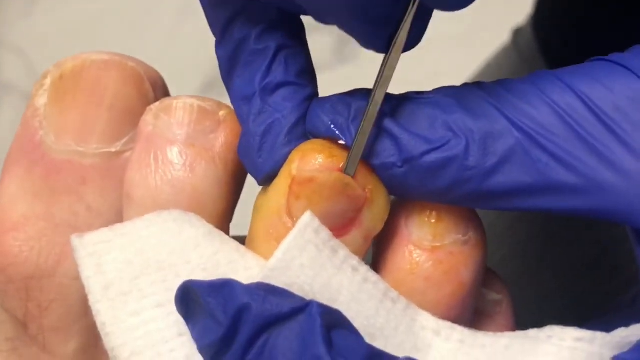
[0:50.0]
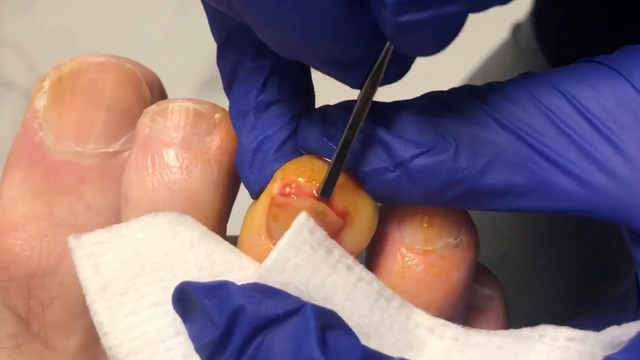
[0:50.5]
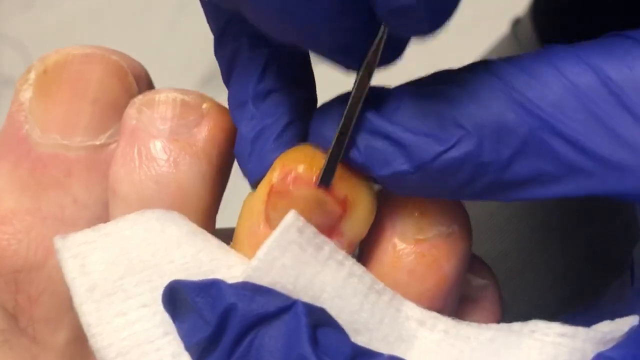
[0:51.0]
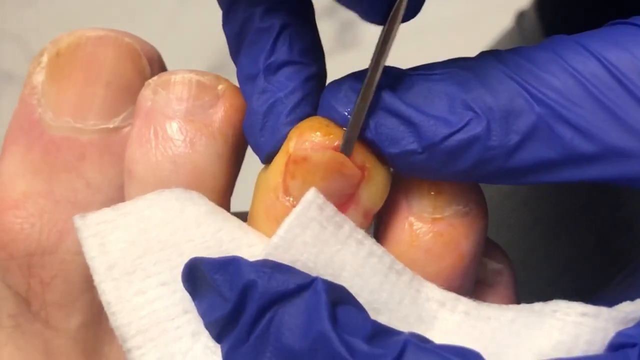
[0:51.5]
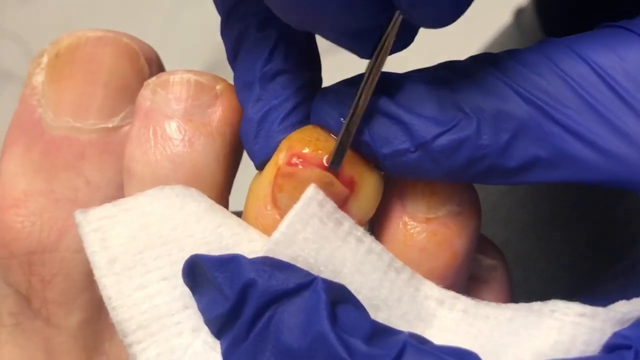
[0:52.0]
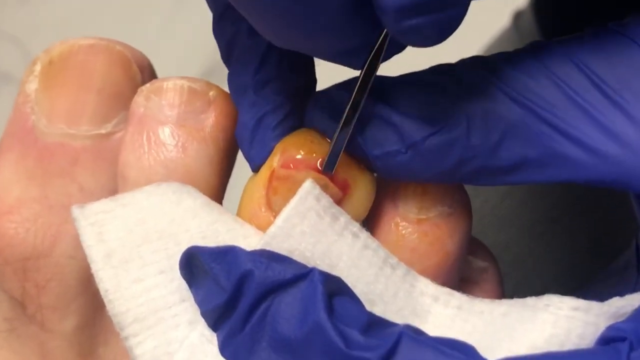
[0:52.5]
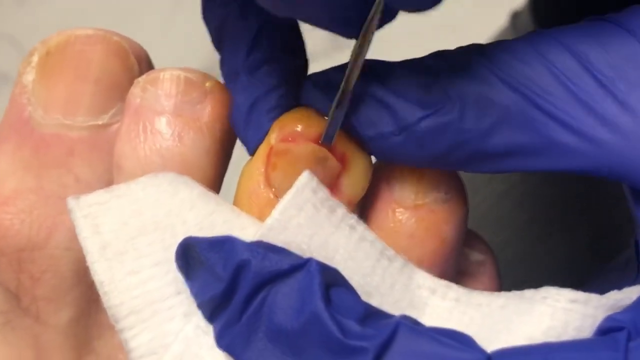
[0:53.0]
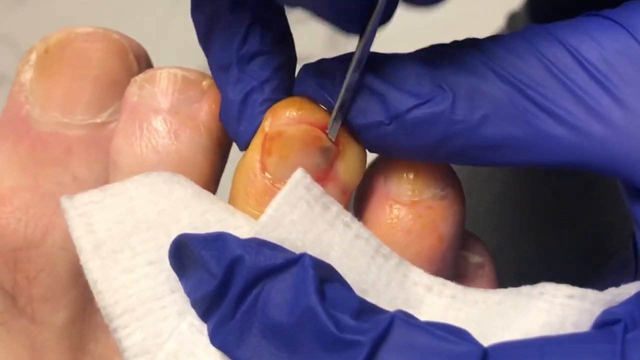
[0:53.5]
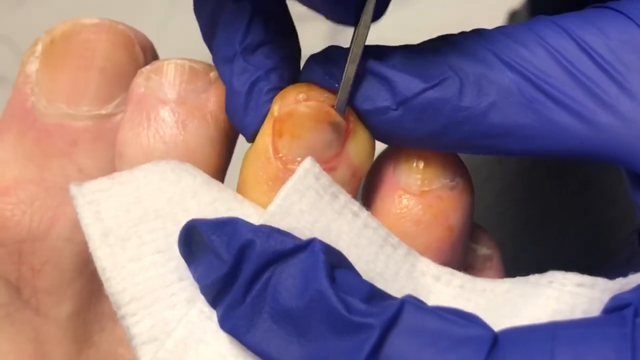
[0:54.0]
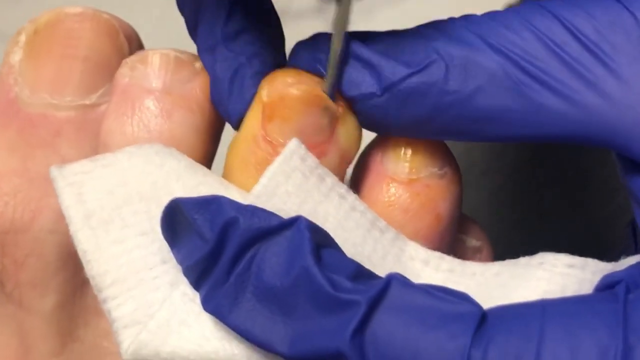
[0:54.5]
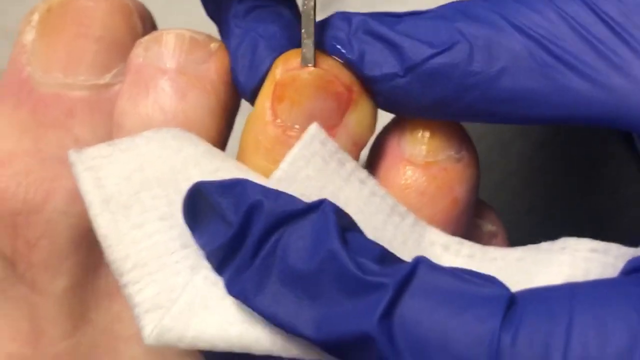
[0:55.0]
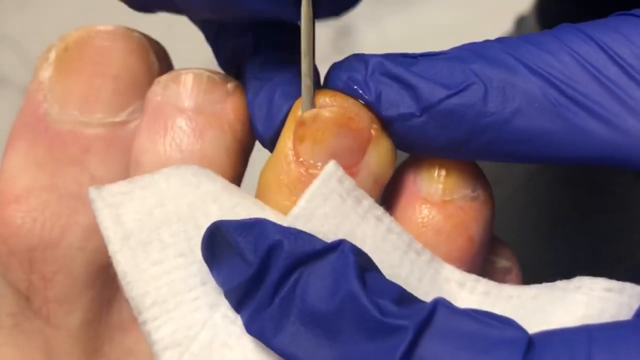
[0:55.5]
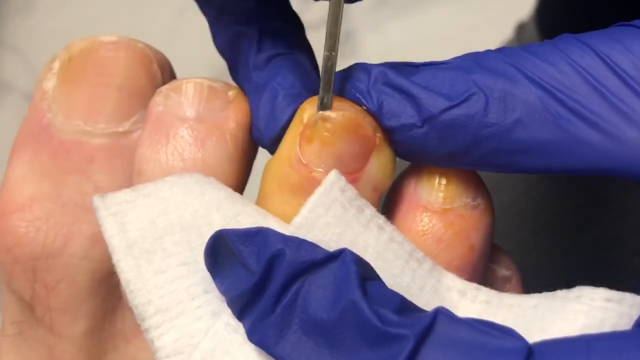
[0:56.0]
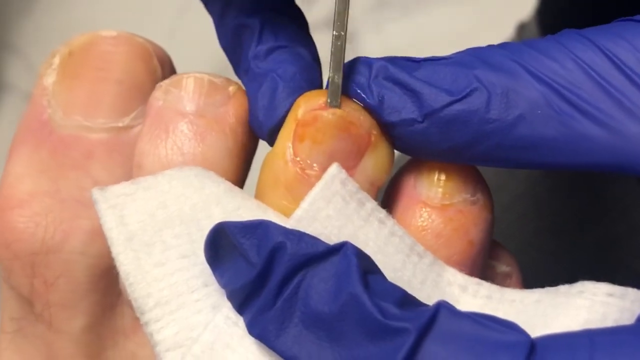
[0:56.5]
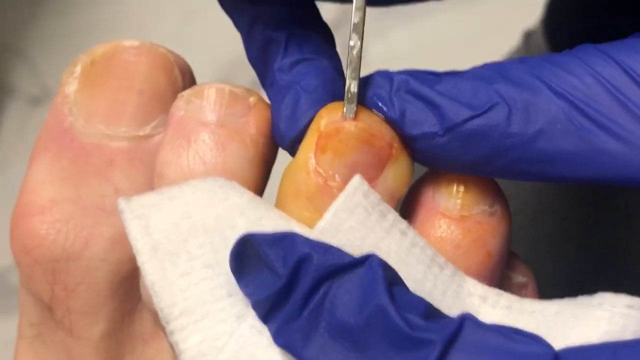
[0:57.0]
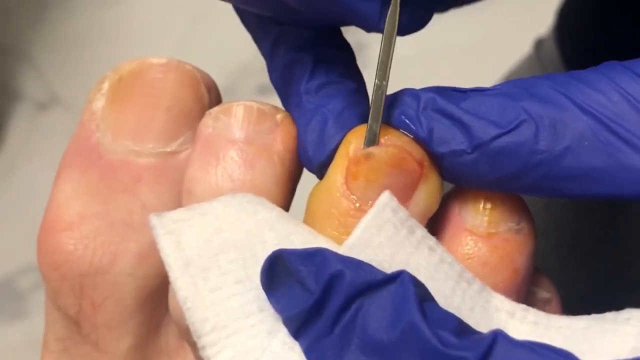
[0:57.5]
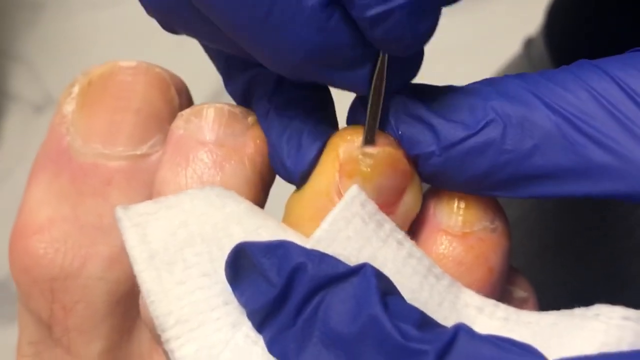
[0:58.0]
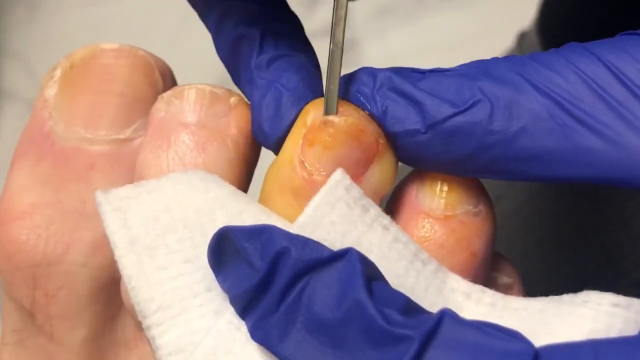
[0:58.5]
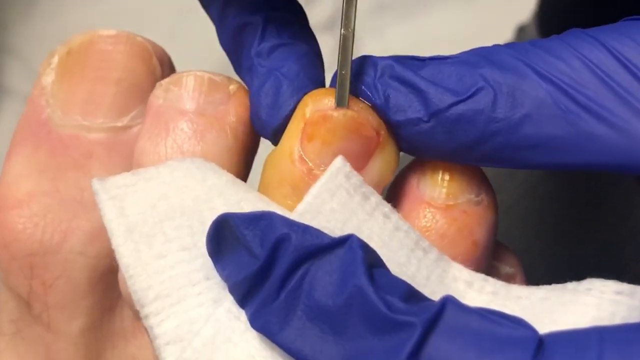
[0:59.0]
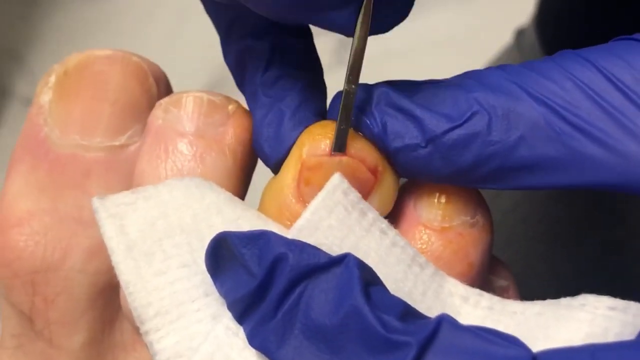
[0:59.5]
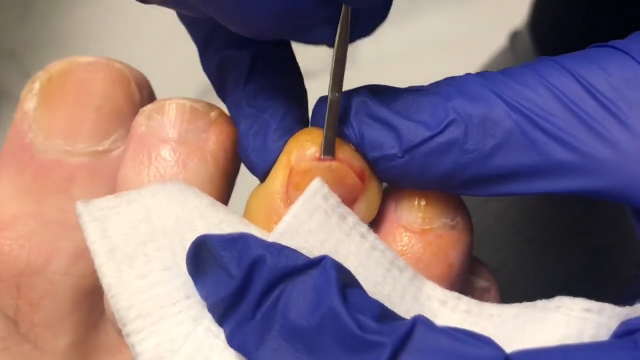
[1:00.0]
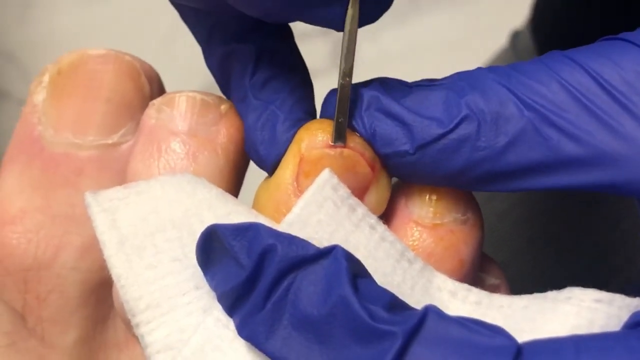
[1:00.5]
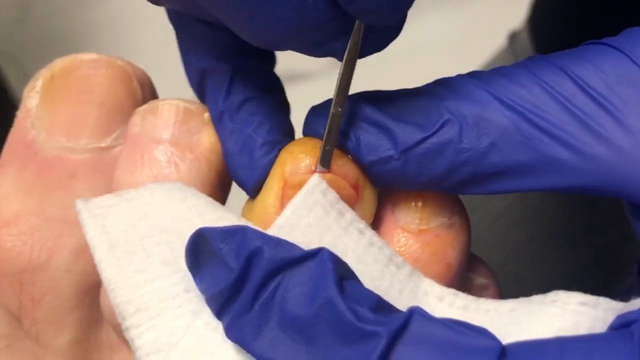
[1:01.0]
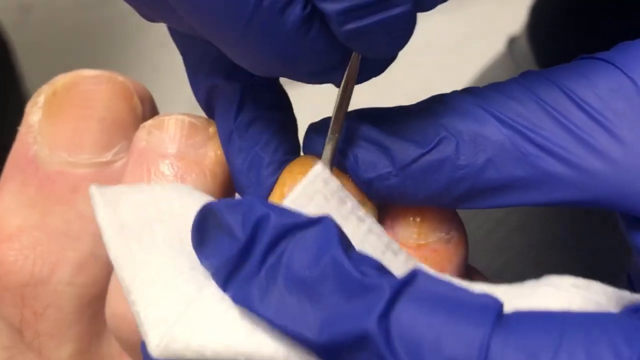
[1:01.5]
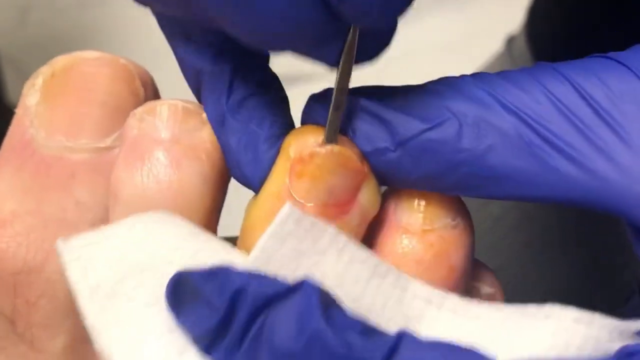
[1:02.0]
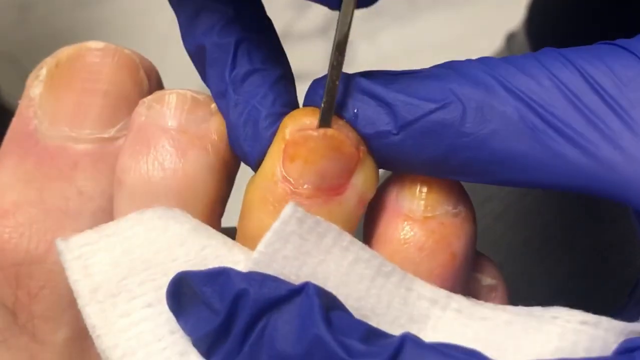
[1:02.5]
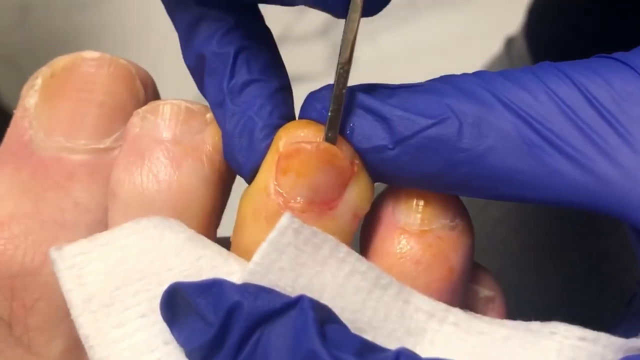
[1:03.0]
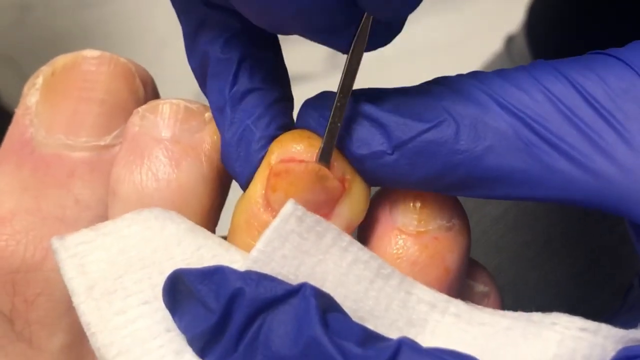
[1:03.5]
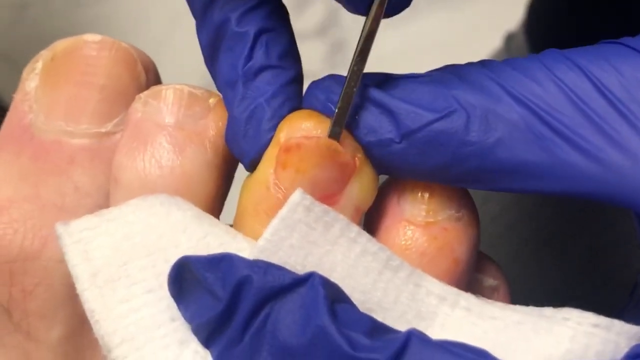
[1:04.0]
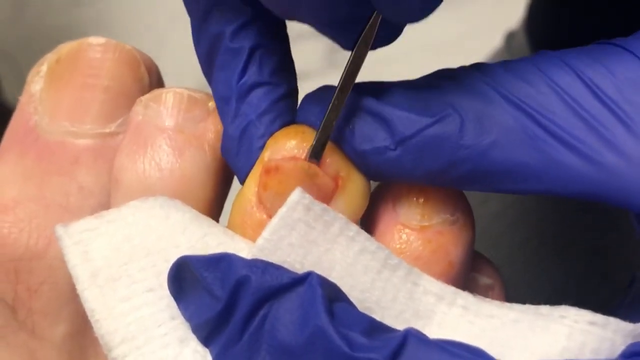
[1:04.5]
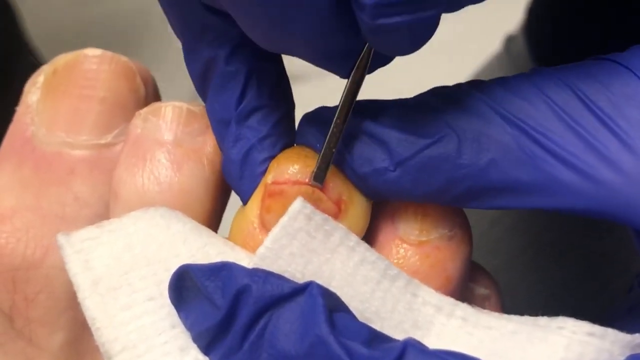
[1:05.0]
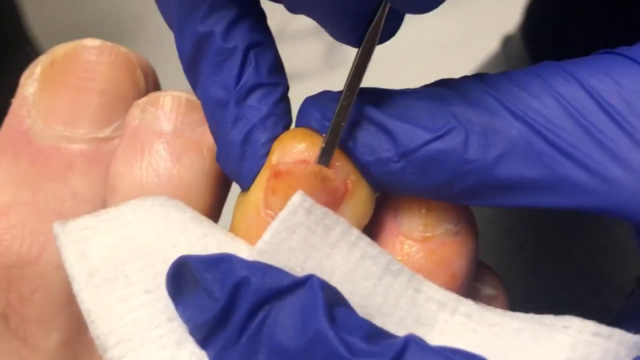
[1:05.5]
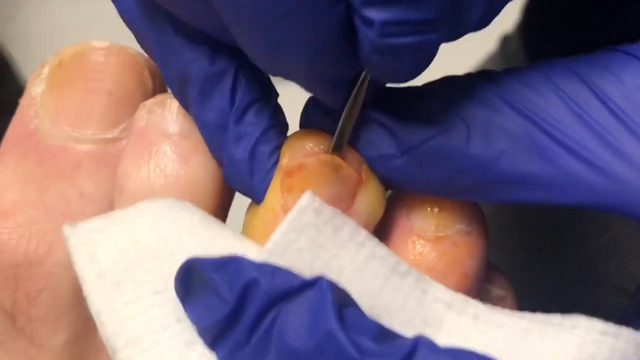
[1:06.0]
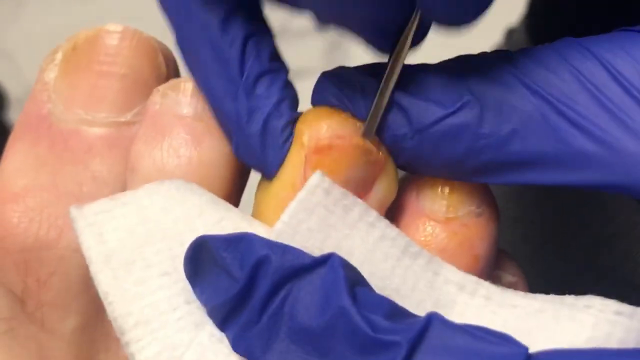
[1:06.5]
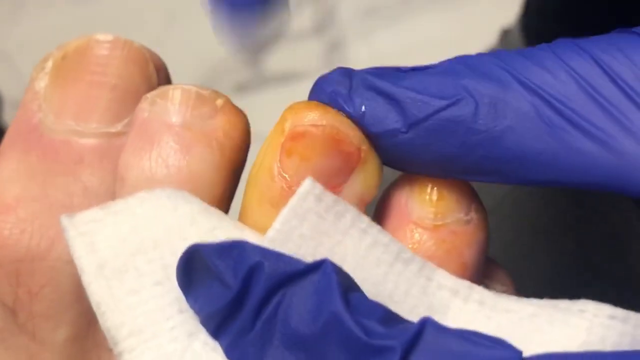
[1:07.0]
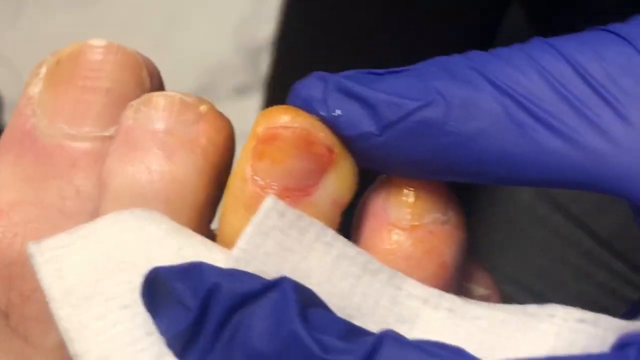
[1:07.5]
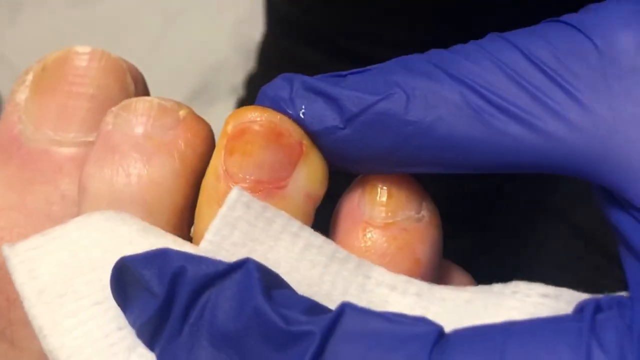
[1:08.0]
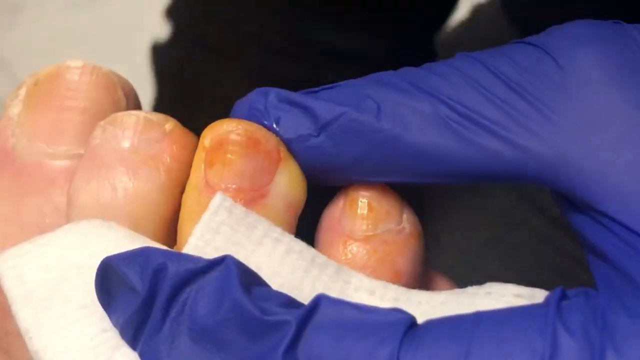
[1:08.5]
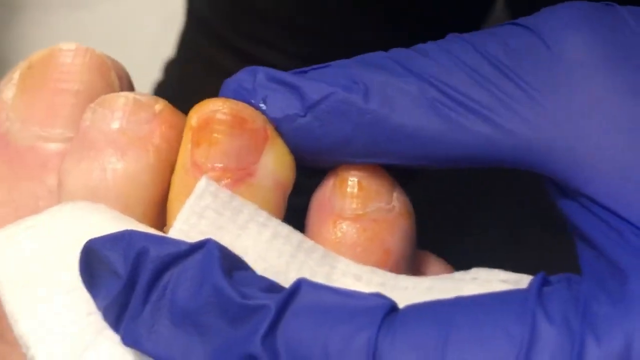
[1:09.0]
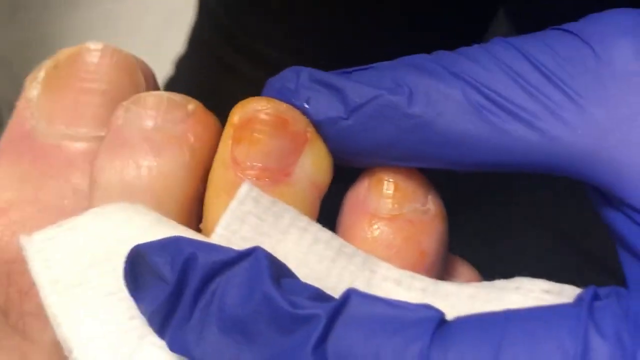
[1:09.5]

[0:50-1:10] The camera remains zoomed in on the toes. The person in dark blue gloves keeps pushing the metal object into the middle toe while holding the piece of gauze on the top of the foot with their thumb. They appear to continue pushing the object into the toenail, focusing on going all the way from the top to the bottom. The parts where the toenail is still attached to the foot are visible because it gives a little, and they work the object across and back and forth to get it through, apparently having to apply pressure to get it down. They use almost a knife motion once it is in. Then the object comes out and the device moves out of view; because the camera is so zoomed in, what happens to it cannot be seen.